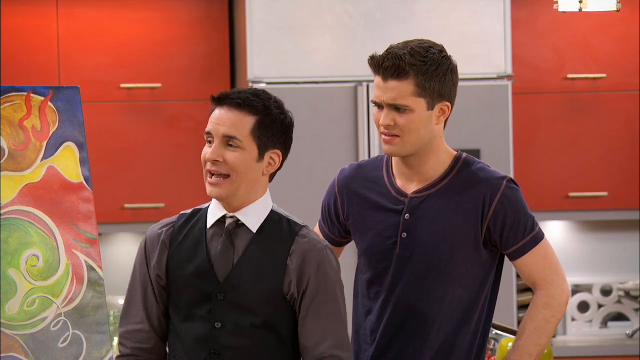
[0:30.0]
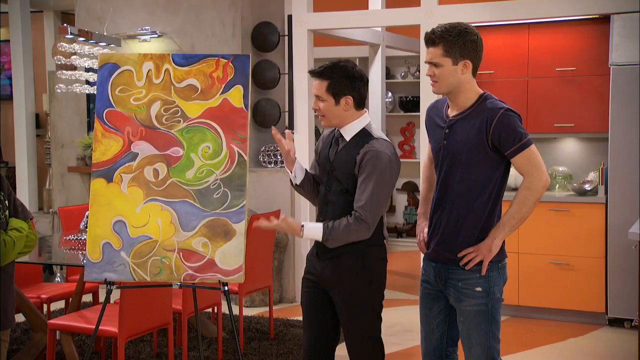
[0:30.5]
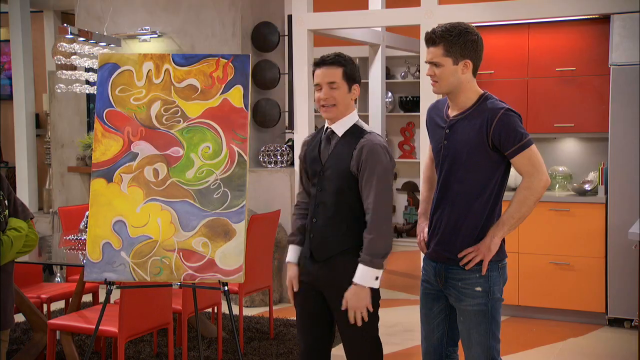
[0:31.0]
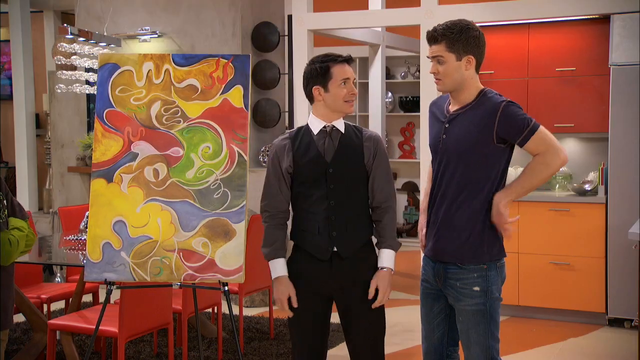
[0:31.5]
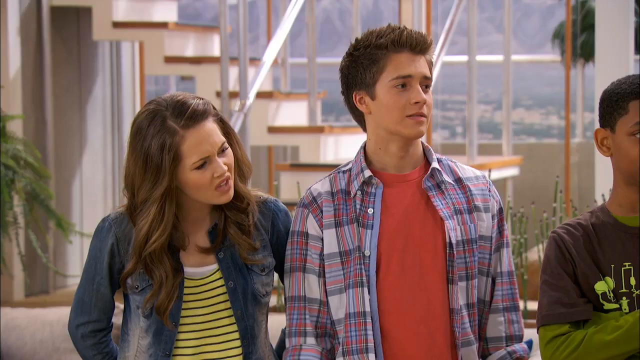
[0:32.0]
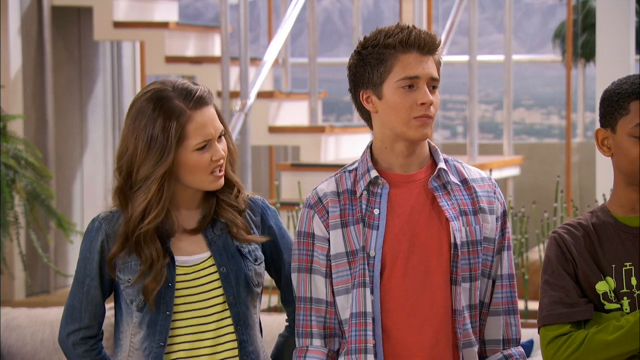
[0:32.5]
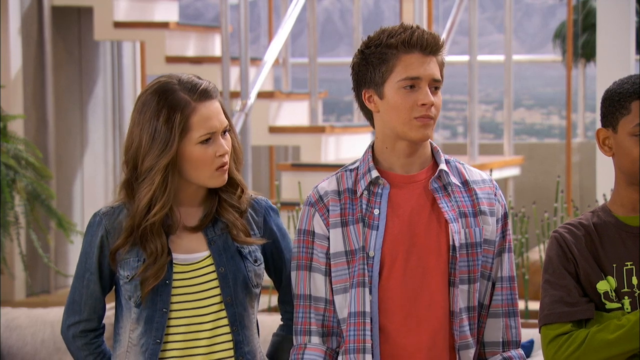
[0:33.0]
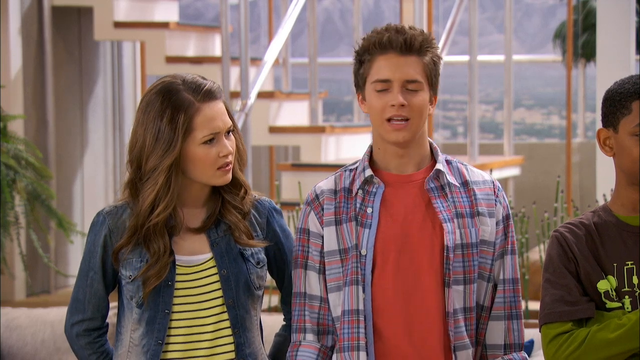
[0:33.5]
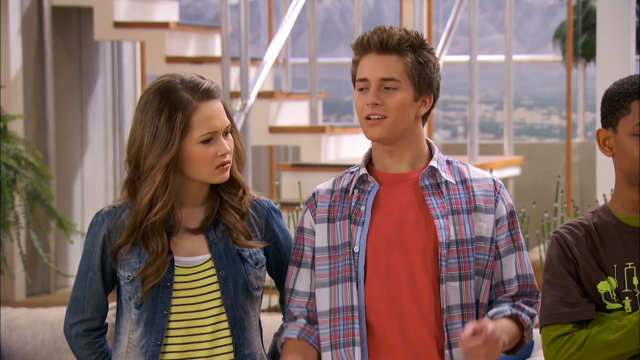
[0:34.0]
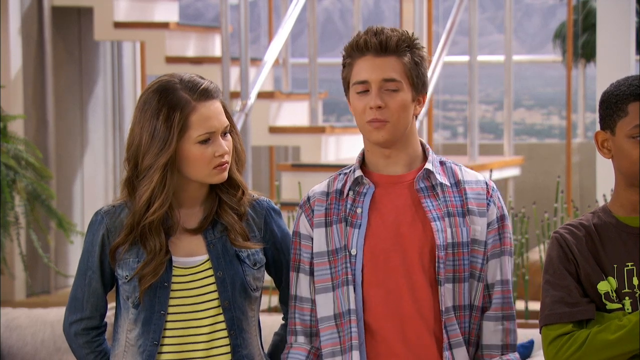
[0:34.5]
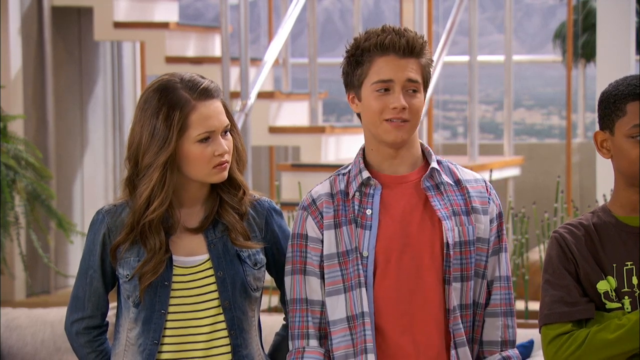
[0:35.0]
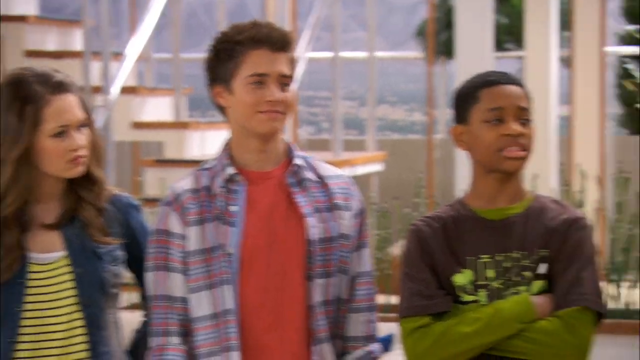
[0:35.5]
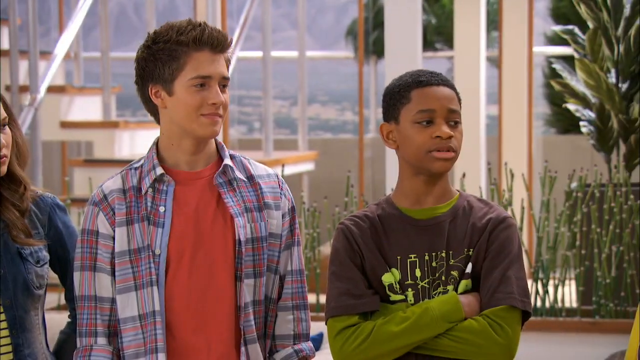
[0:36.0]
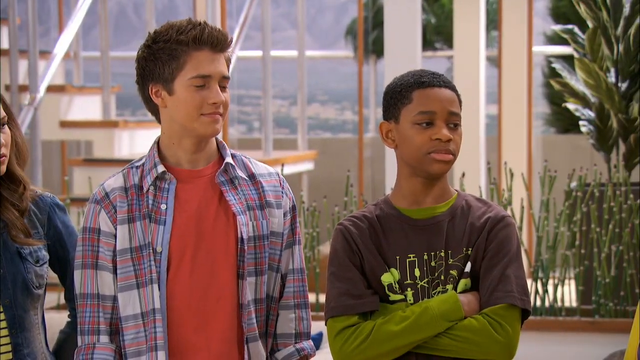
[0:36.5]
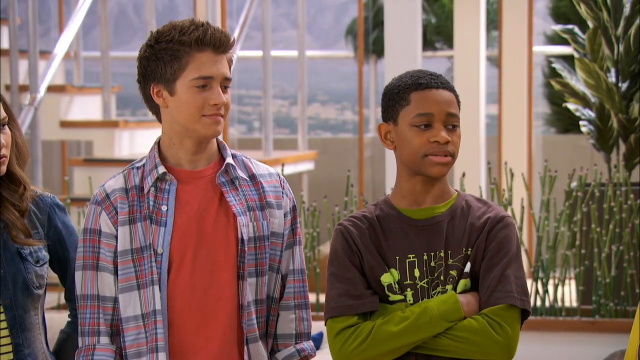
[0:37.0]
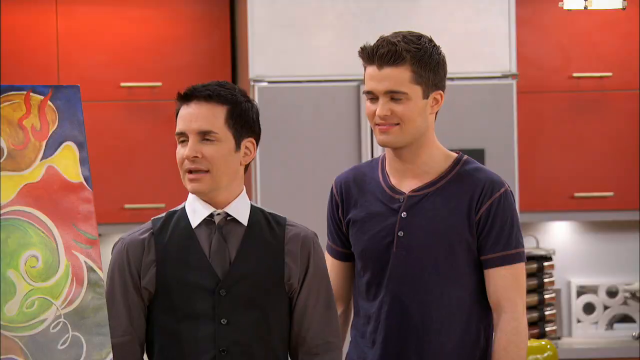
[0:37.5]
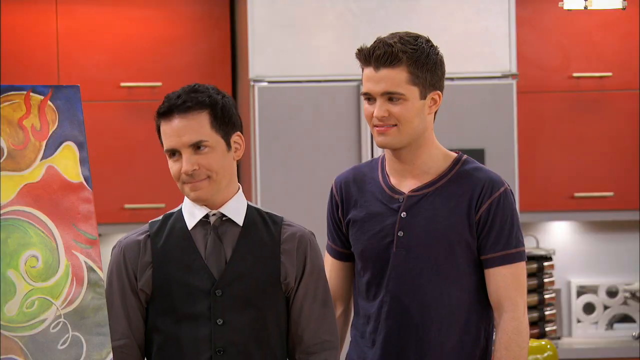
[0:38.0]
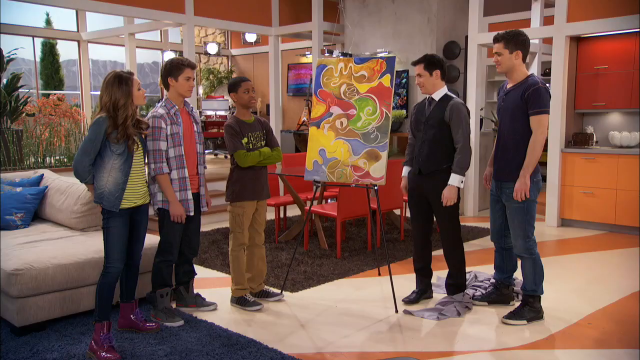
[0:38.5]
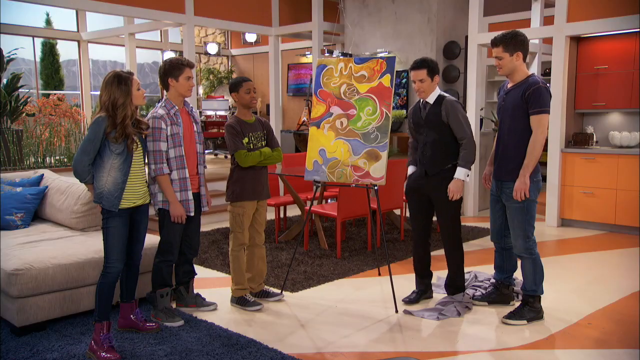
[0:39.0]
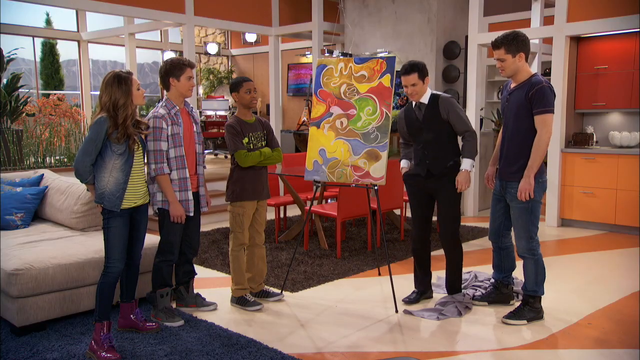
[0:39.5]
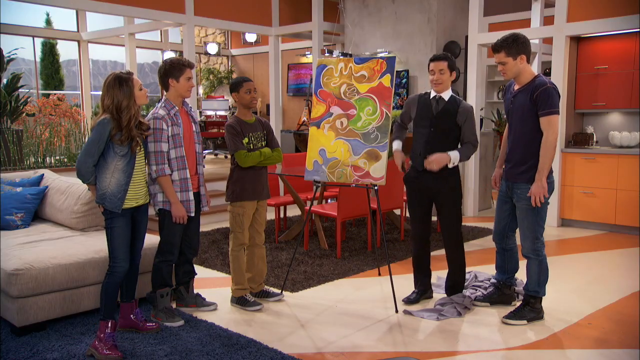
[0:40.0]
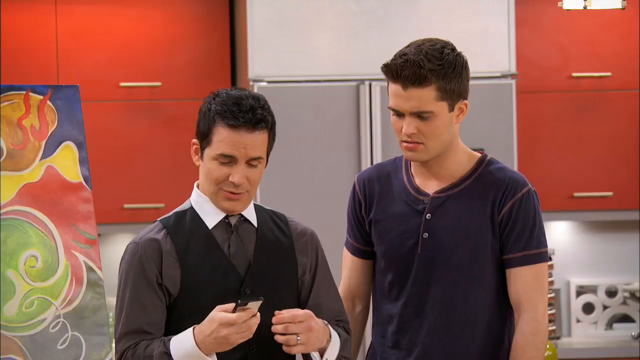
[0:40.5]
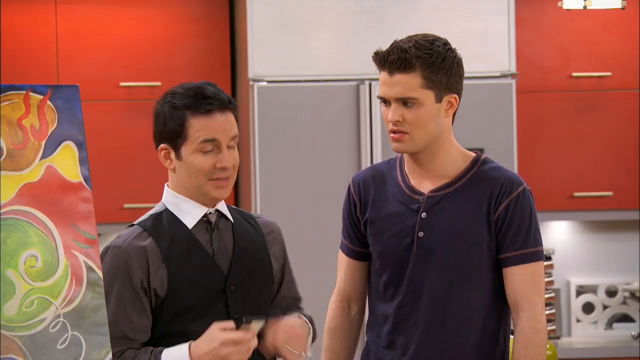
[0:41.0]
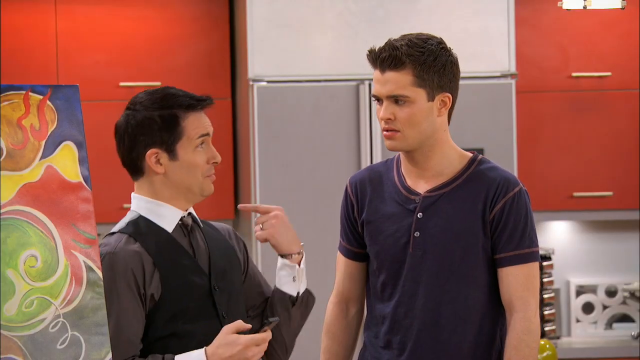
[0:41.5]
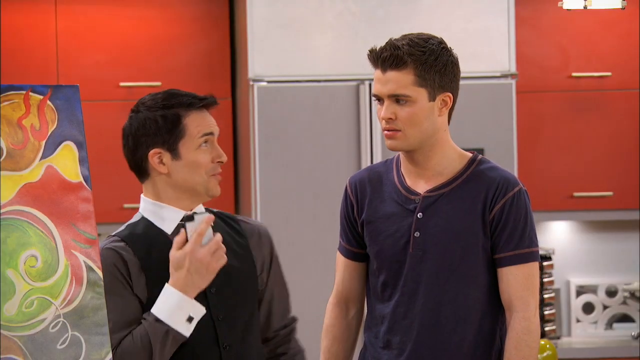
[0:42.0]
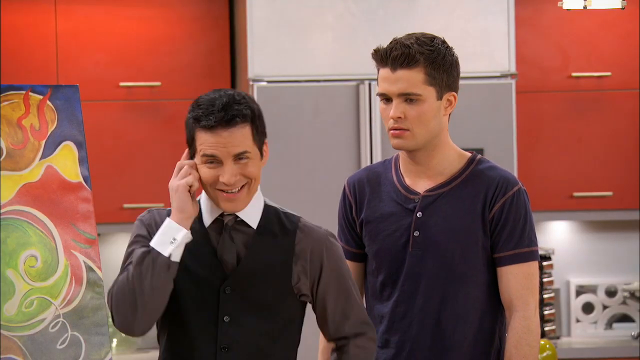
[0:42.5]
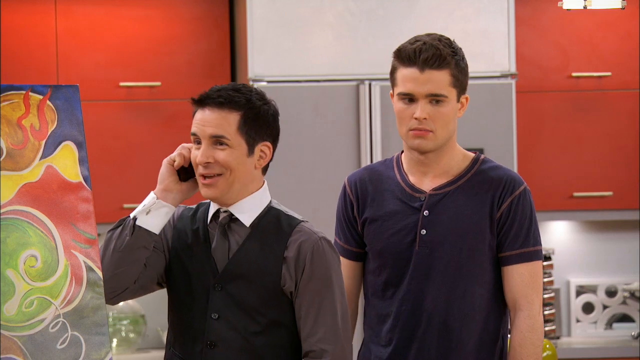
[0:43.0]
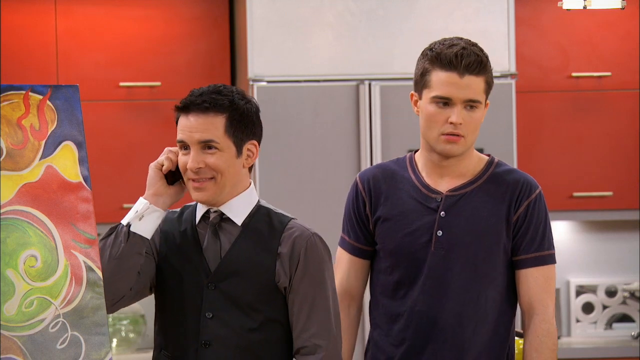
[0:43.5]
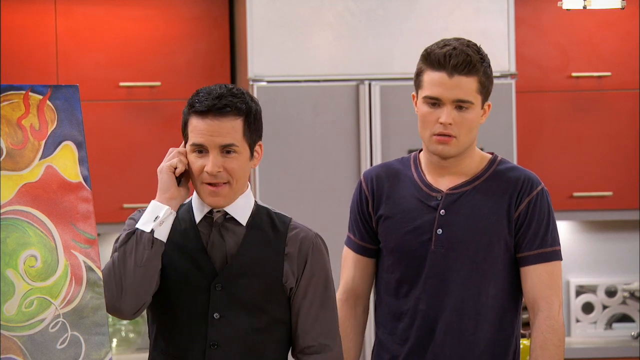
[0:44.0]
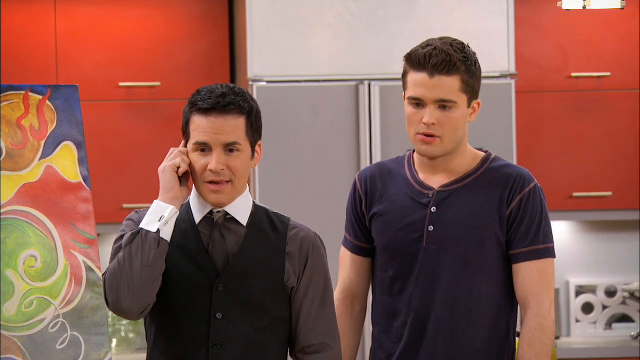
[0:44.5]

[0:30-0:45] The scene appears to be from a television show. There are five characters: two adult men and three teenagers, two boys and one girl. They are standing in what appears to be a loft apartment, with a large staircase behind them leading to a second floor off screen and a large wall of glass windows through which a city and mountains are visible in the distance. The apartment is fairly modern, with many red and orange cabinets, and there is a tile floor with area rugs. The adult man wears a dress shirt, a vest and a tie, and the teens are all in relaxed clothing. In front of them is an easel with a fairly abstract painting. The man points at the painting and gestures with his hands as the kids look at it; they appear to ask questions about it one at a time. The camera pulls back out, and the man reaches into his pocket, pulls out a phone, and points to himself to show the other man standing next to him that the call is for him. He turns, looks at the phone's screen, answers, and puts the phone up to his ear.